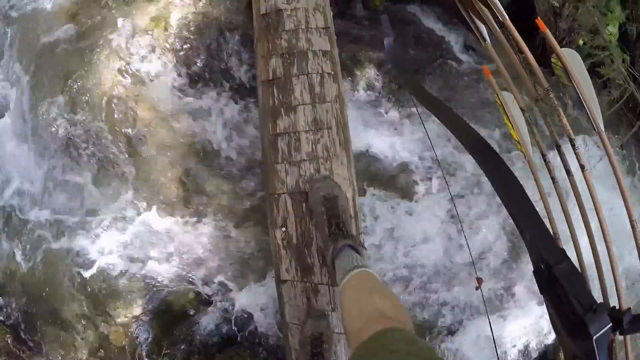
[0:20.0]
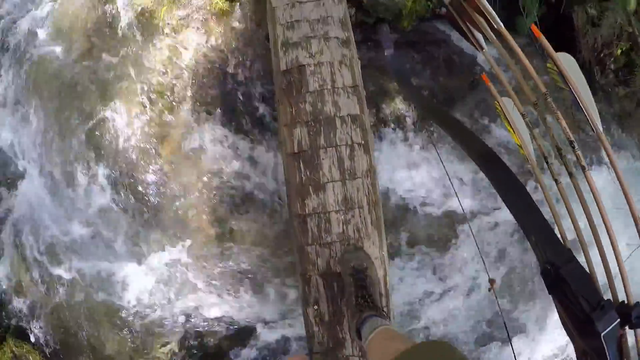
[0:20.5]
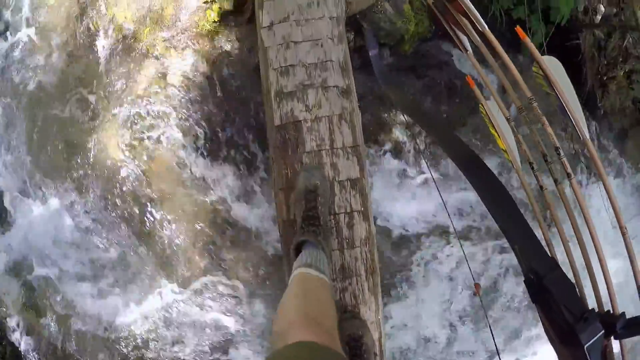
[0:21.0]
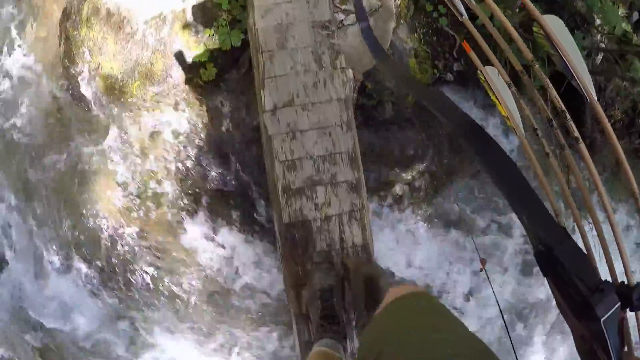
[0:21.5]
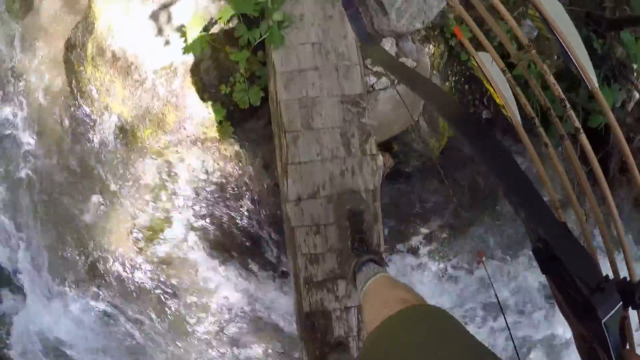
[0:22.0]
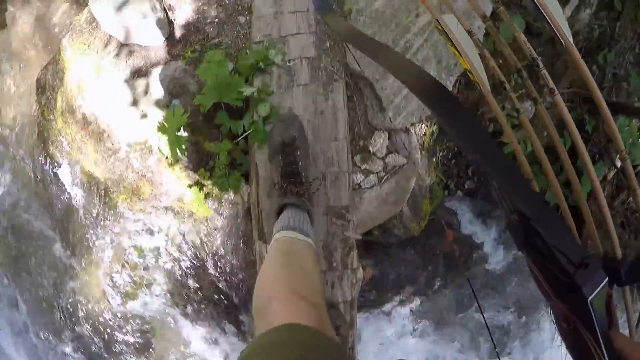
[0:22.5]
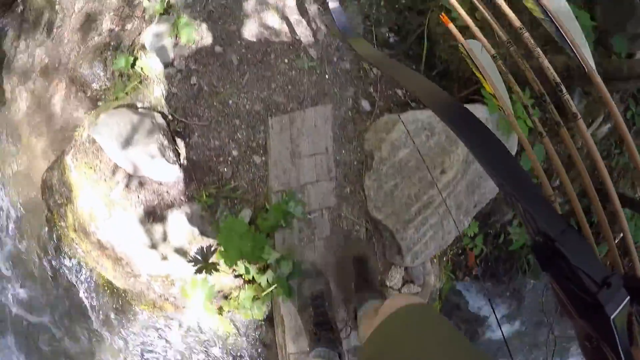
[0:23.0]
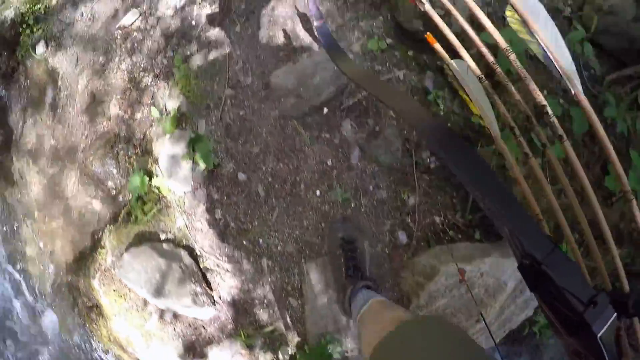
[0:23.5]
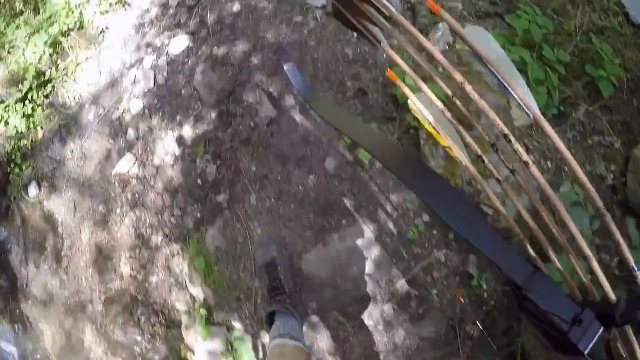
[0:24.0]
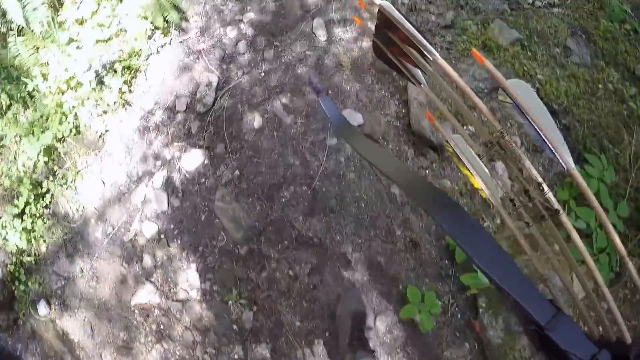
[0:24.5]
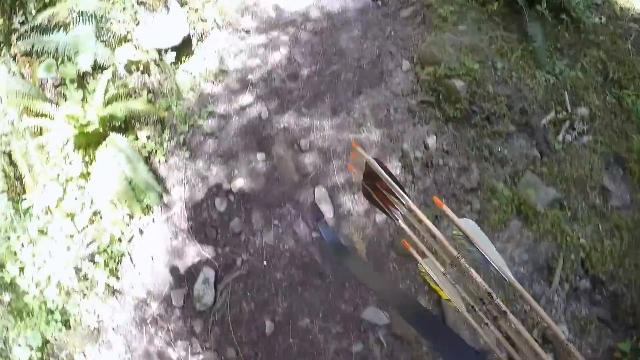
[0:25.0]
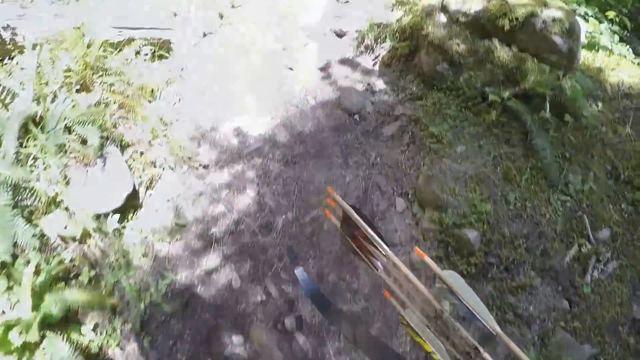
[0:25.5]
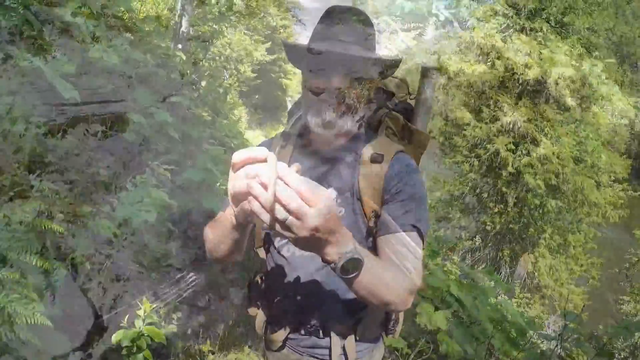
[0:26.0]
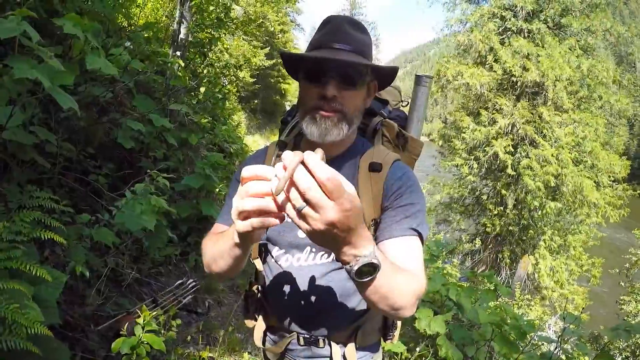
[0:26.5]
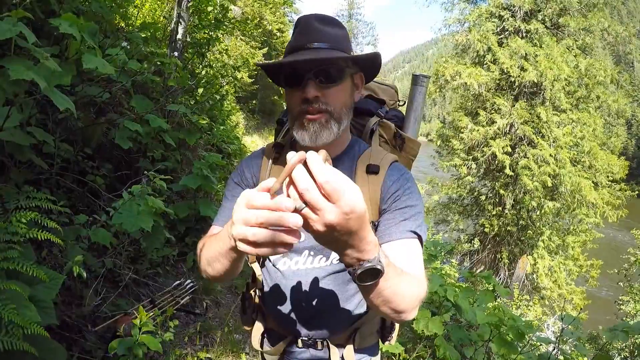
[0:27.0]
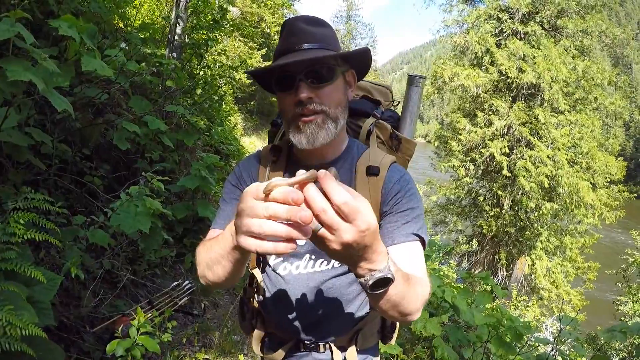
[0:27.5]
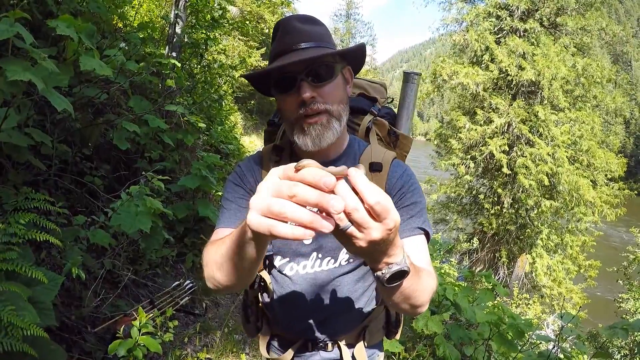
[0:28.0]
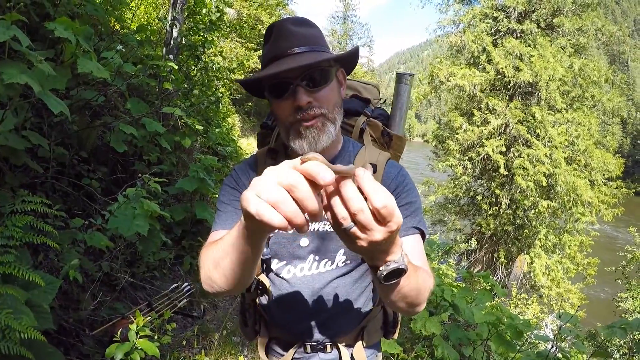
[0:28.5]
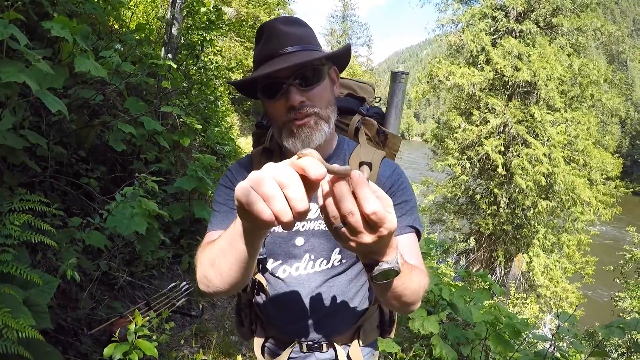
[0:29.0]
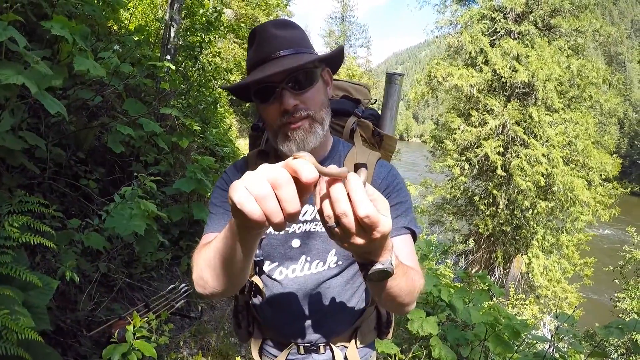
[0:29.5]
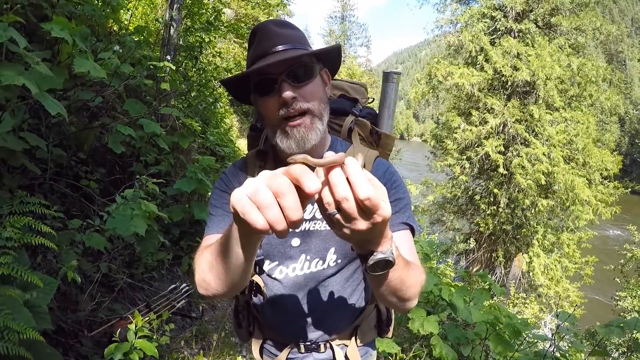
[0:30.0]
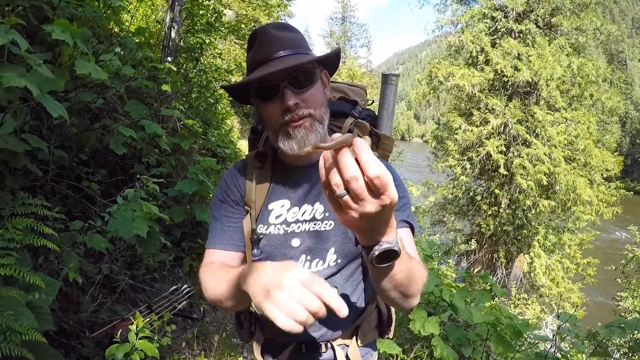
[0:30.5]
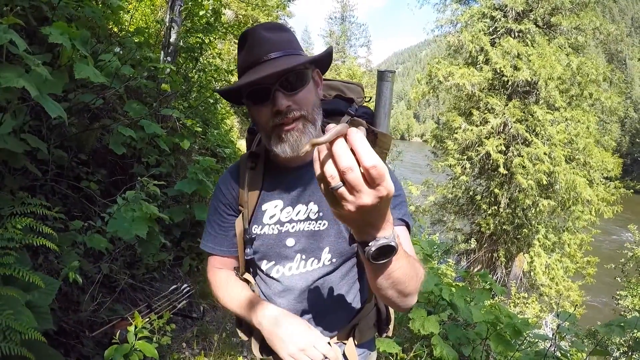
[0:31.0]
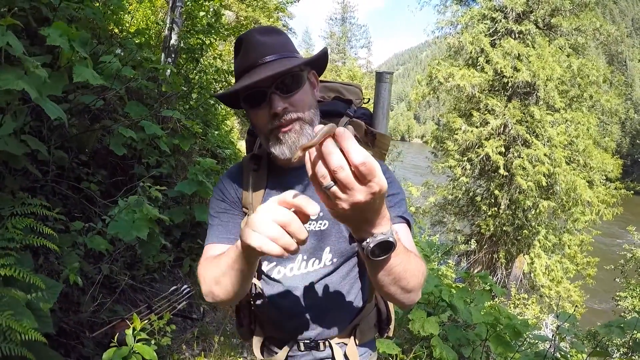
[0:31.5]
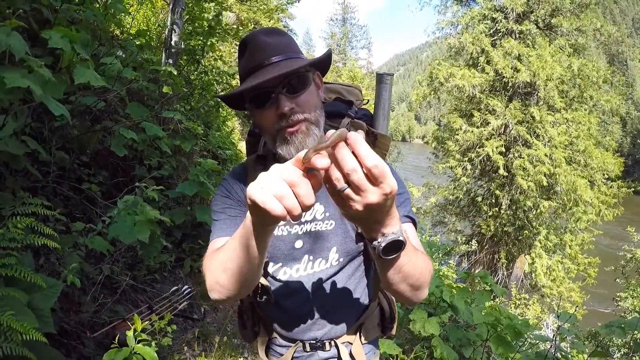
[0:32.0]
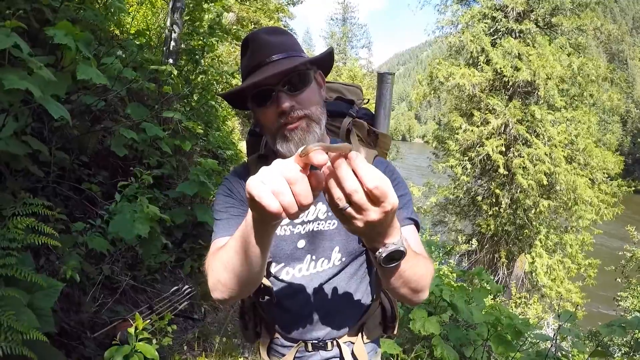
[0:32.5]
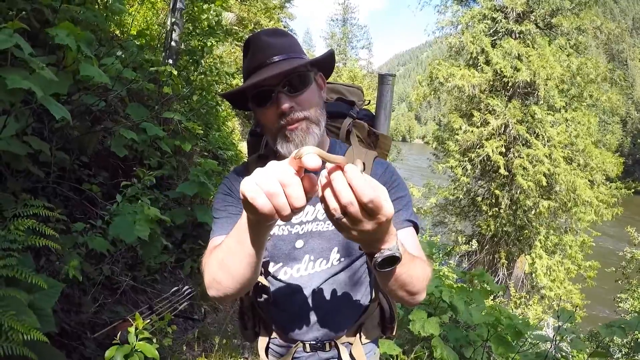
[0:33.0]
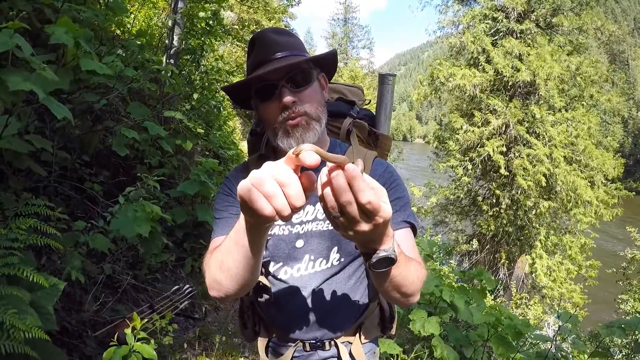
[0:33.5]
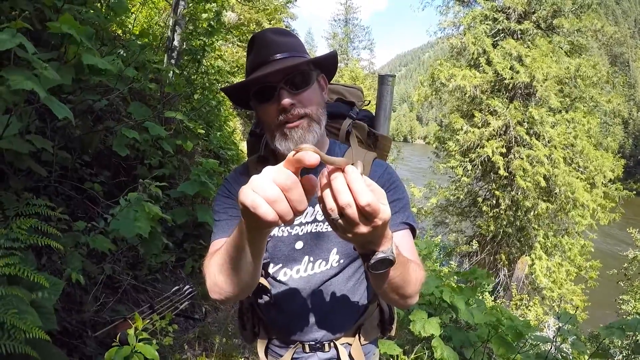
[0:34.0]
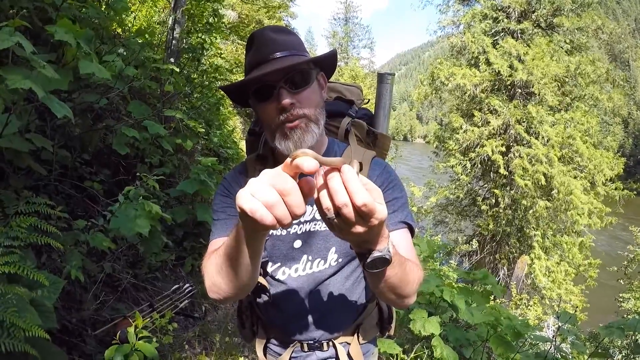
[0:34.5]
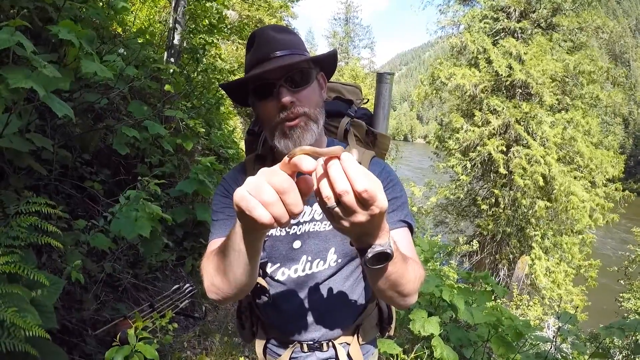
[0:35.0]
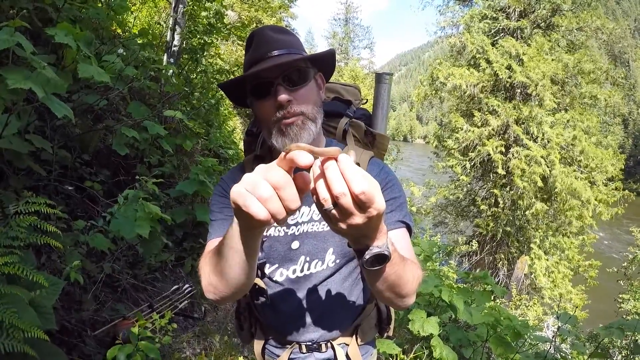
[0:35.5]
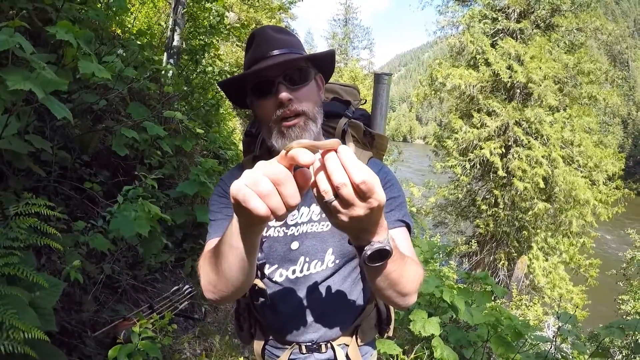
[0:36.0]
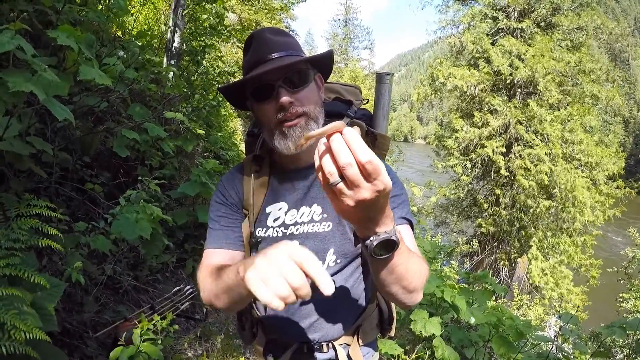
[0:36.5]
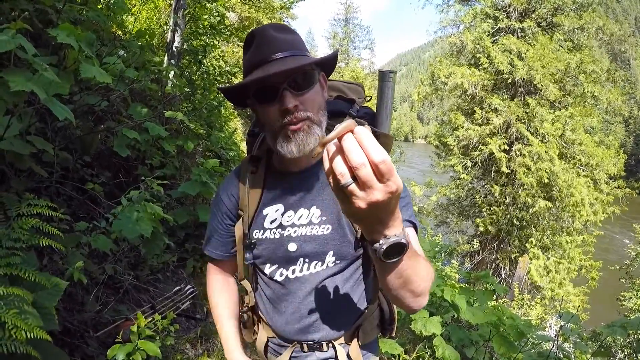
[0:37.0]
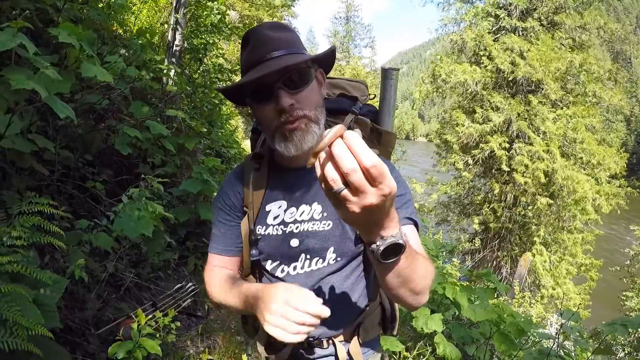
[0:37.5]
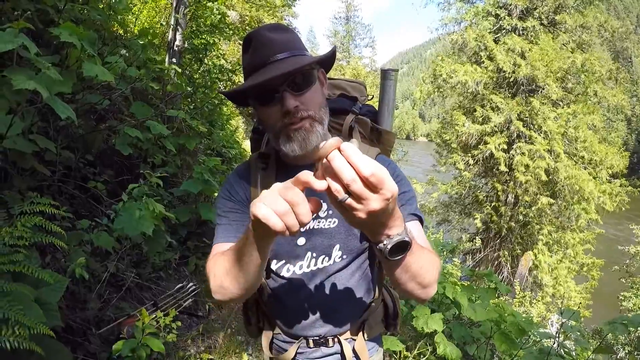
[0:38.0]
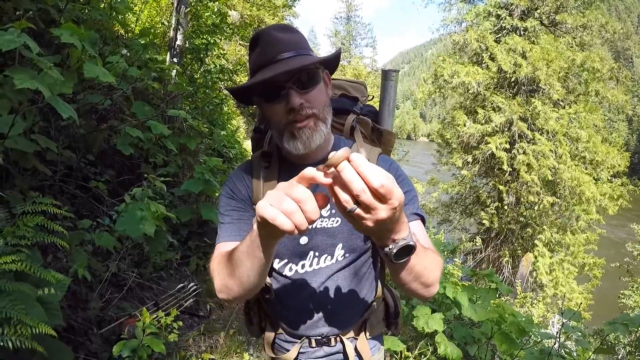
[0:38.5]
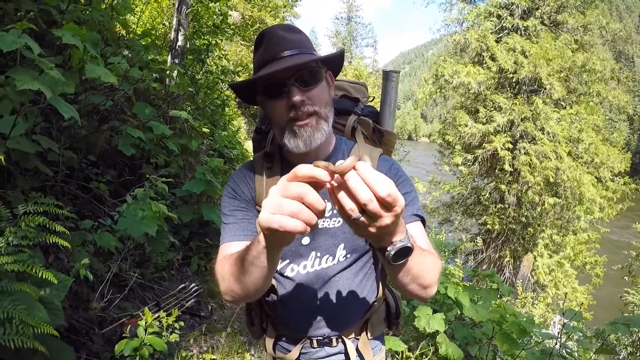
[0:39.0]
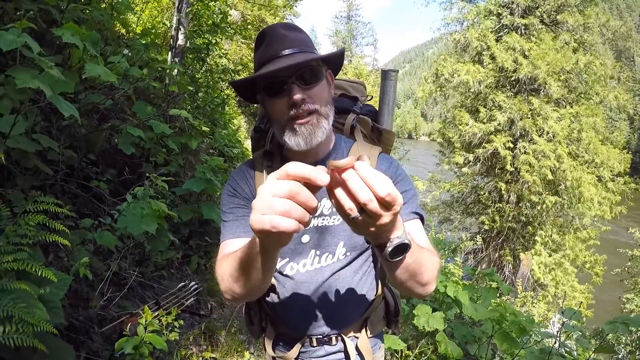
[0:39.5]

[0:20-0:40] A point-of-view shot shows a man walking across along the width of a telephone pole, standing over a river that is probably 20 to 30 feet below. The water is not very deep, and rapids flow by very rapidly. The man wears hiking boots, calf-length socks and shorts, and in his right hand he has a short bow, with five arrows in the quiver. He walks slowly and confidently, his shadow visible on the ground, and he wears a hat. Once he reaches the other side of the bridge, the camera zooms in on his face: he wears a cowboy-style hat and sunglasses and has a small snake in his hand. He holds the snake with his left hand and occasionally puts the index finger of his right hand under the snake's head and lifts it up, showing that the snake is friendly and not aggressive.